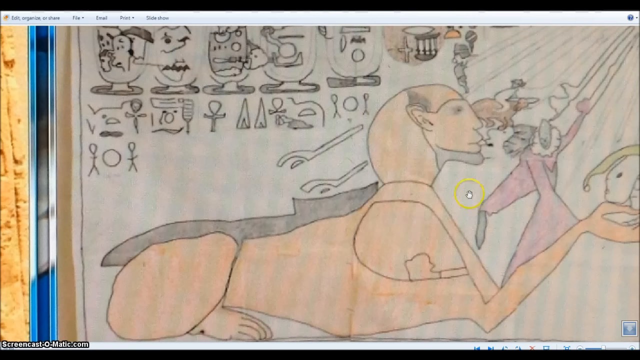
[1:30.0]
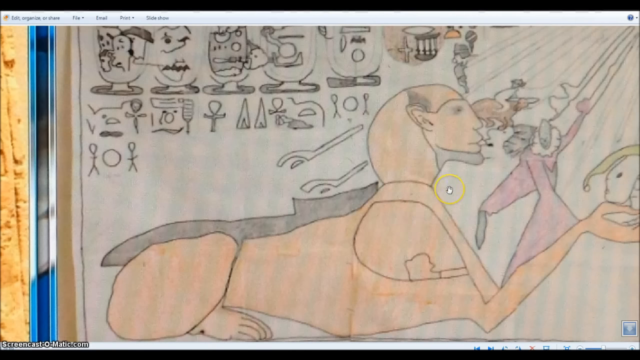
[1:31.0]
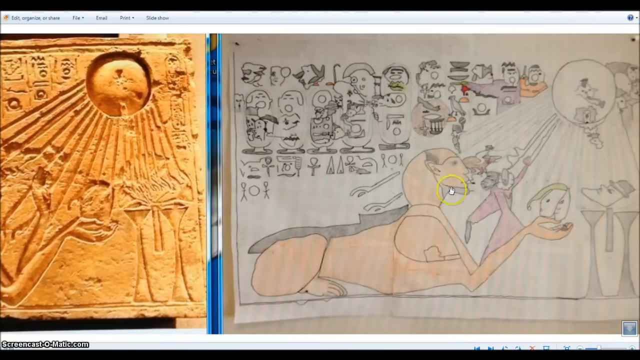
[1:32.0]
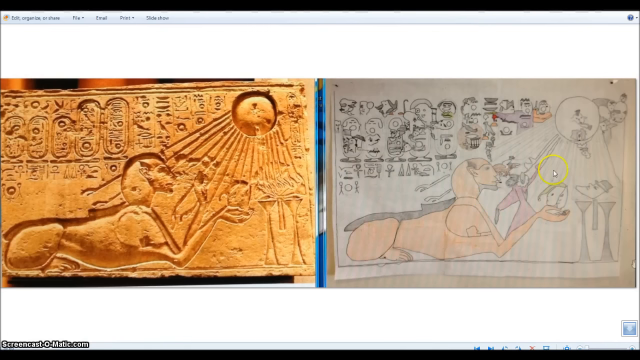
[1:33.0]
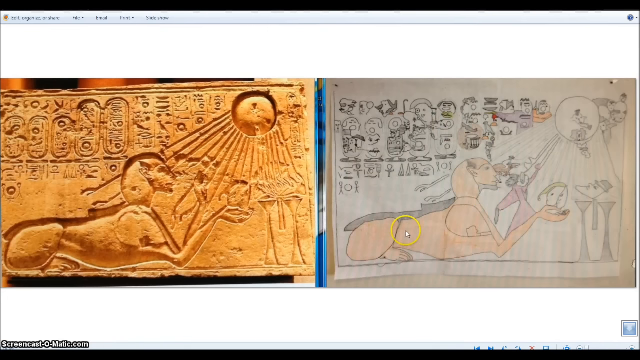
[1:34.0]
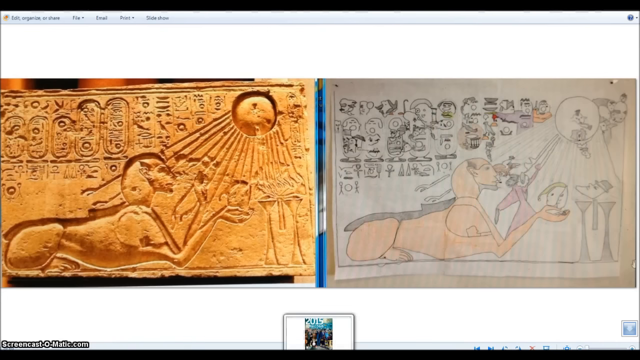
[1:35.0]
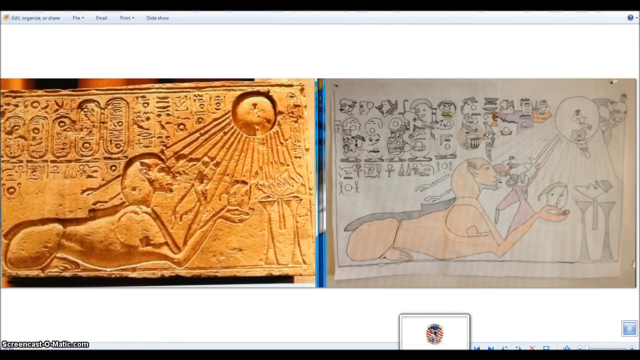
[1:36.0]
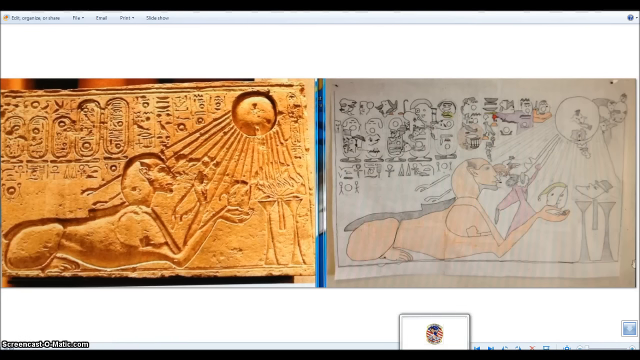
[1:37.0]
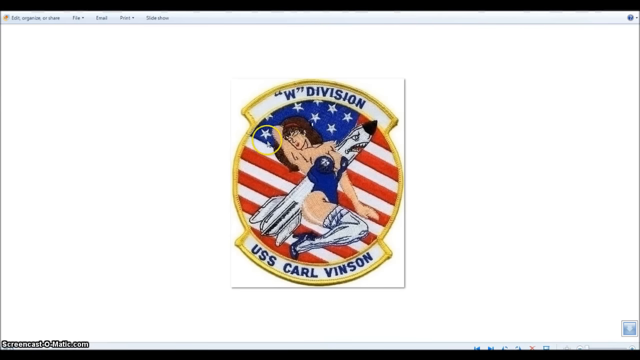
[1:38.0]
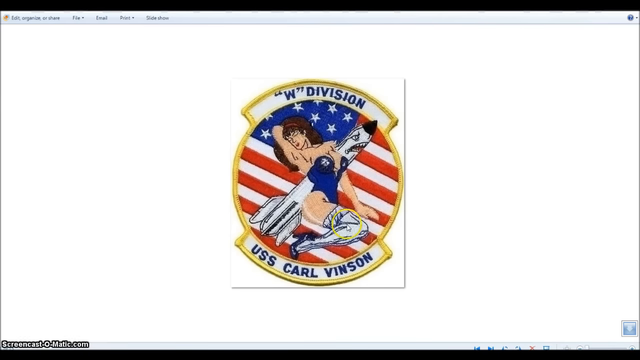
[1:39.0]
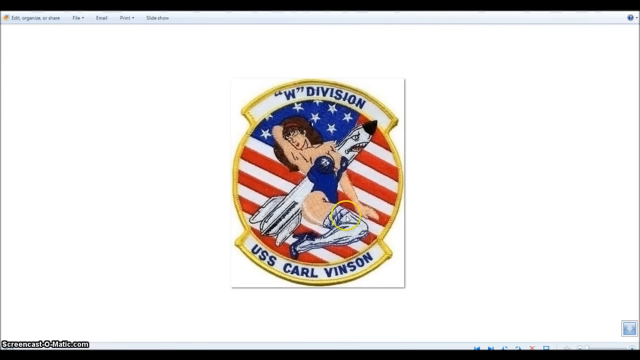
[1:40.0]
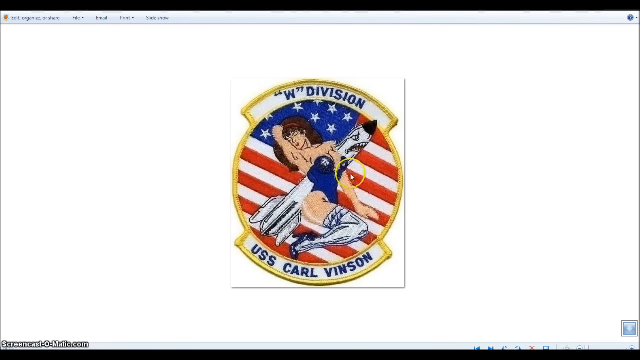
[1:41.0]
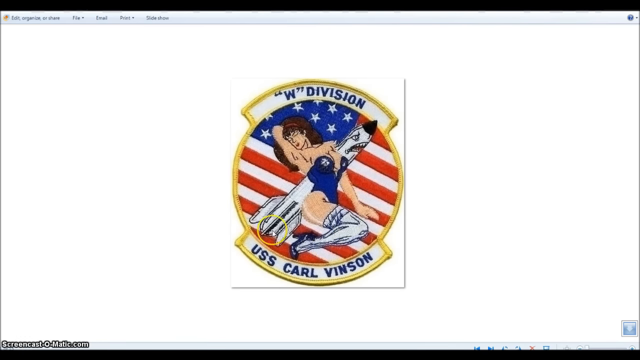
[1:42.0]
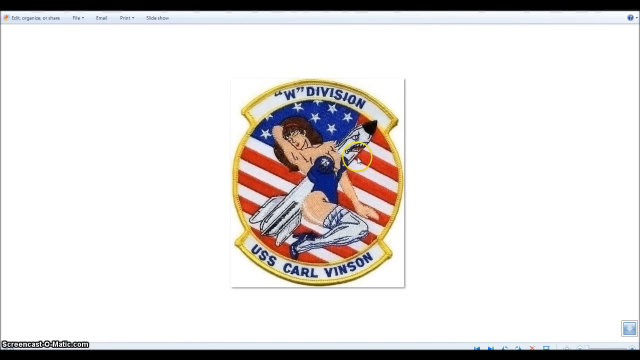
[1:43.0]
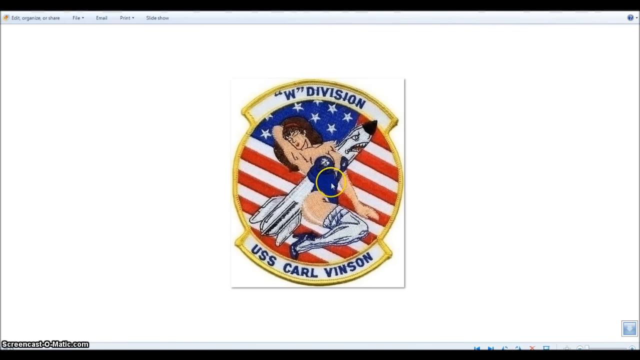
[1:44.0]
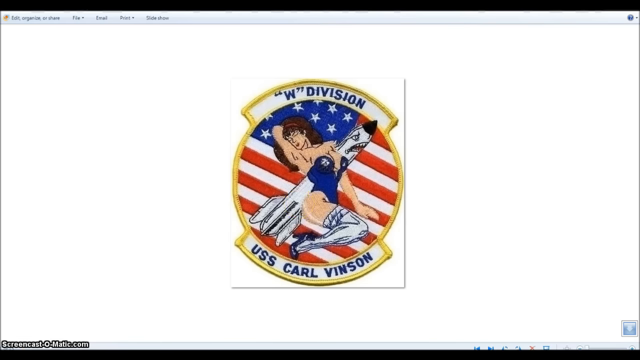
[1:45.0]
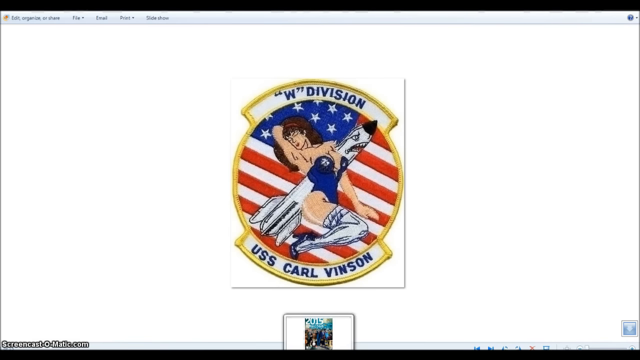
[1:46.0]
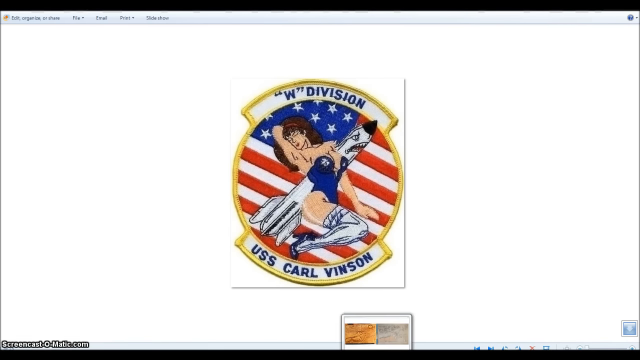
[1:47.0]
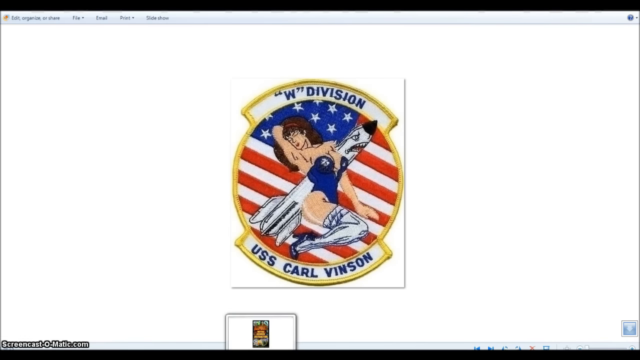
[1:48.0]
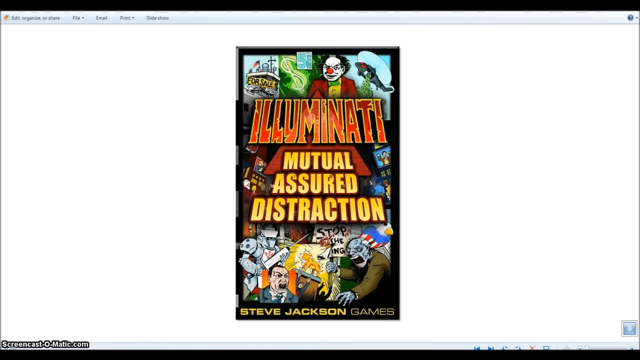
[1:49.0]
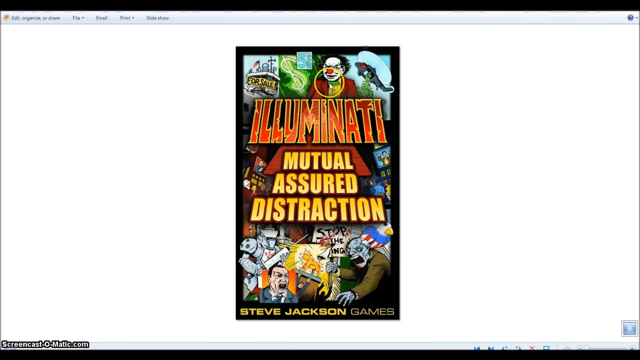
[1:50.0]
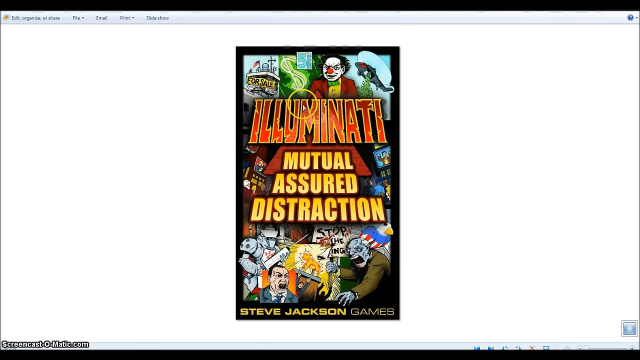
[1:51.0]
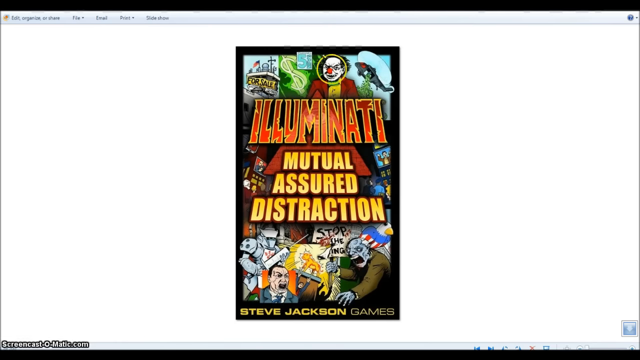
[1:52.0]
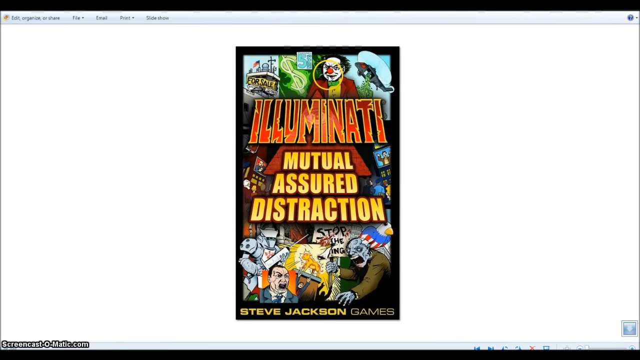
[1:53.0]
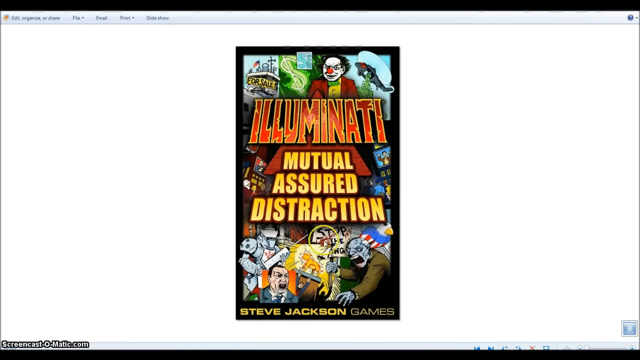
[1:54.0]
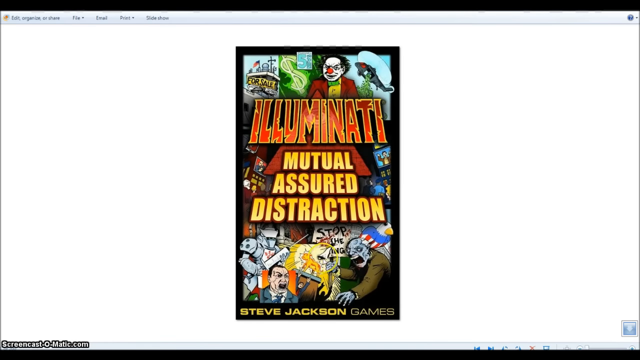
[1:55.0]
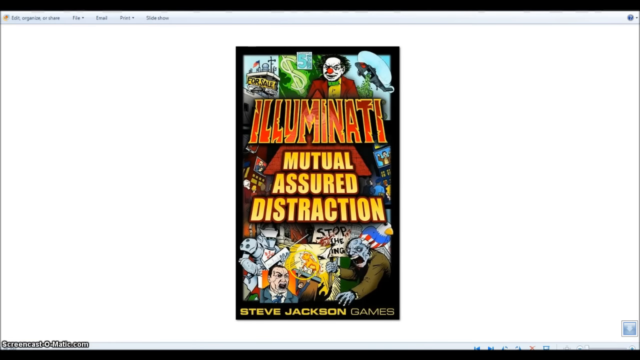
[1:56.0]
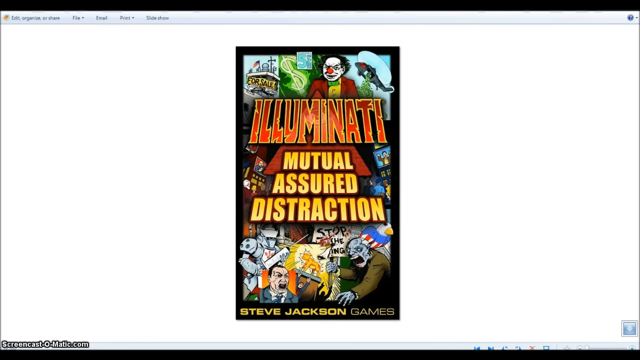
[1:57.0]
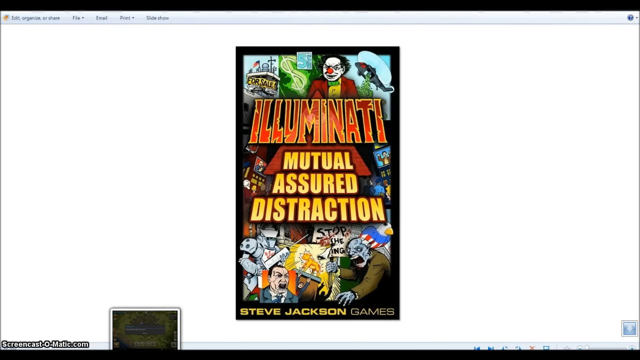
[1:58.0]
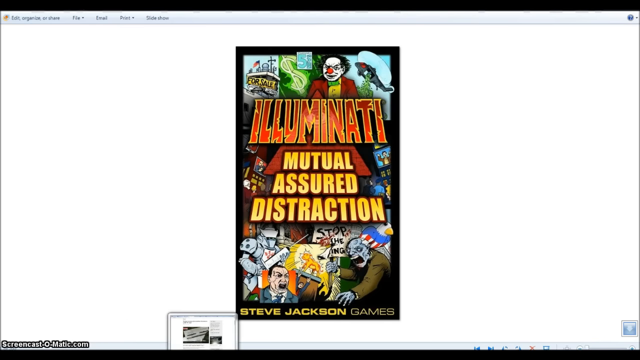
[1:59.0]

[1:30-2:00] The drawing is zoomed in and the circled cursor indicates some parts of it. Then, on a white background, a logo appears with the text "W Division, USS Carl Vinson". The background of the badge is the U.S. flag, and it shows a lady who is sleeping on a rocket, wearing a very sexy costume. The view then changes to the Illuminati, Mutual Assured Destruction, which resembles a comic book with different paintings, and the cursor moves over the heads of the people in it.